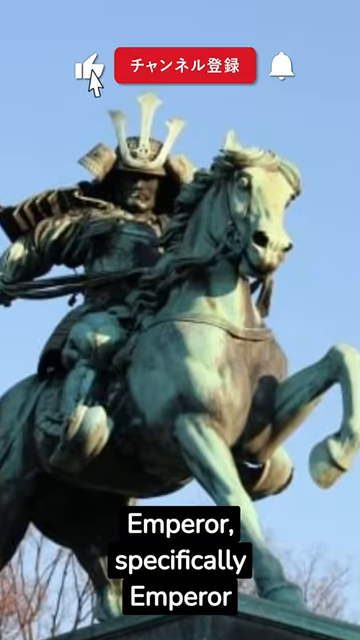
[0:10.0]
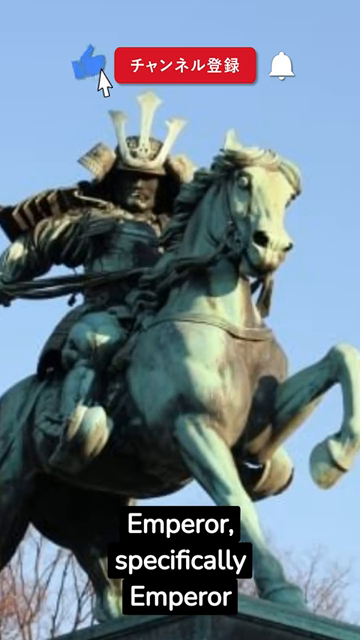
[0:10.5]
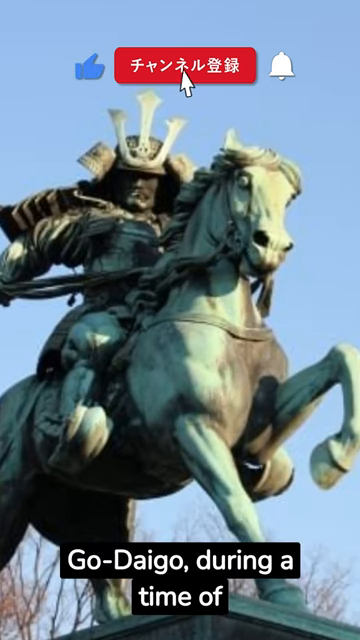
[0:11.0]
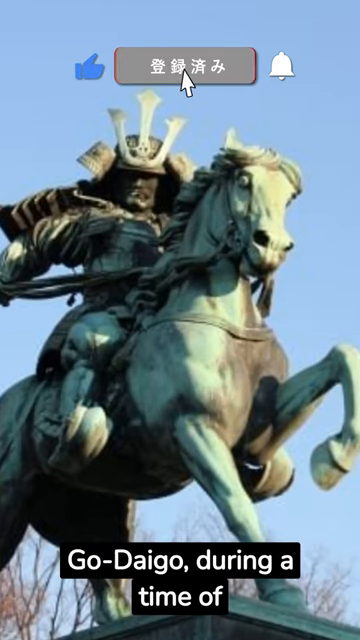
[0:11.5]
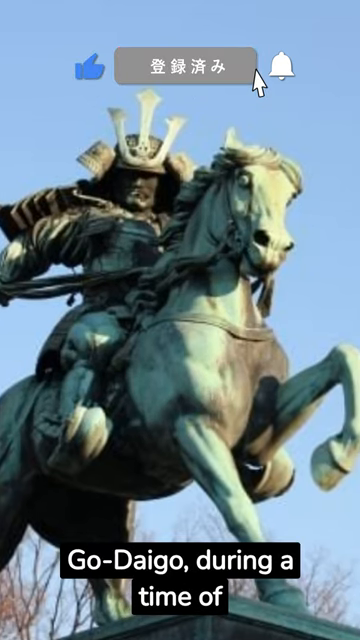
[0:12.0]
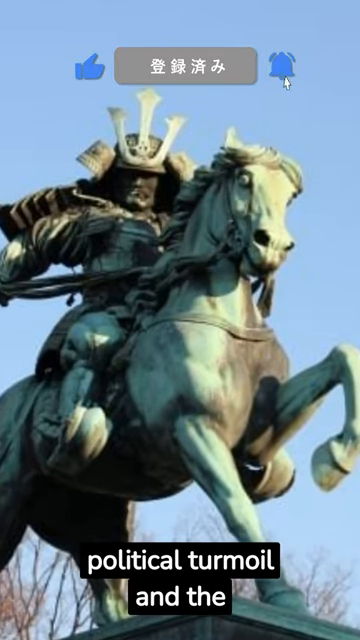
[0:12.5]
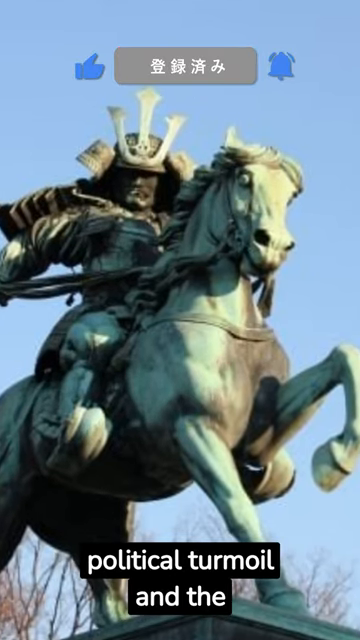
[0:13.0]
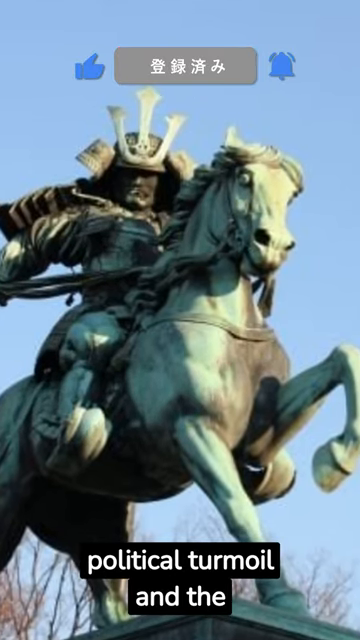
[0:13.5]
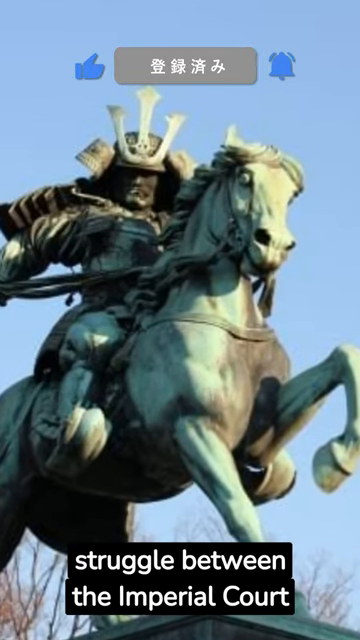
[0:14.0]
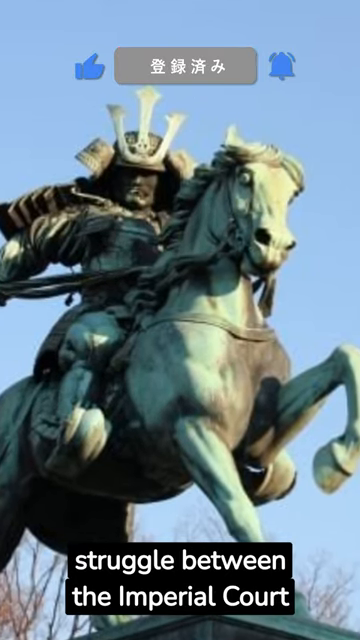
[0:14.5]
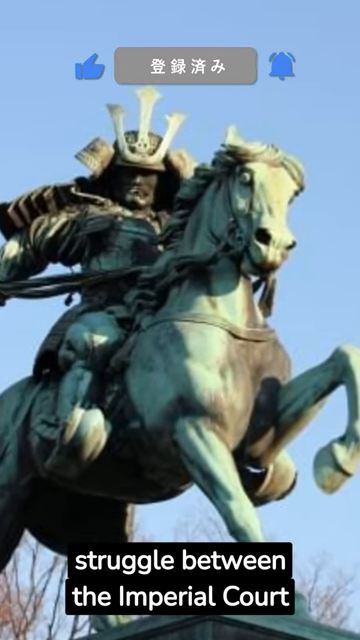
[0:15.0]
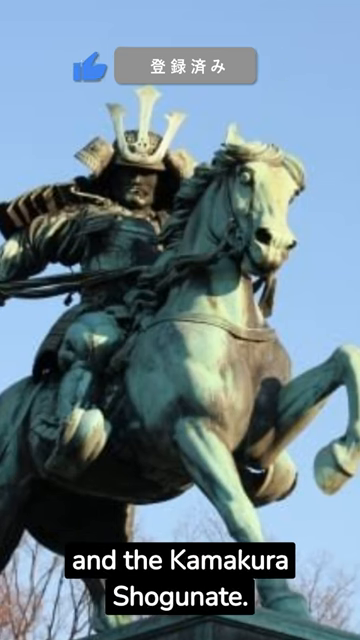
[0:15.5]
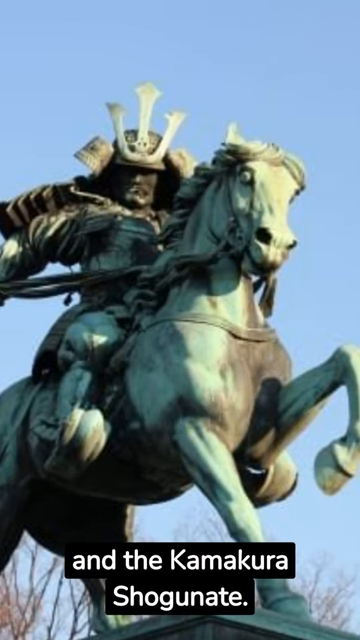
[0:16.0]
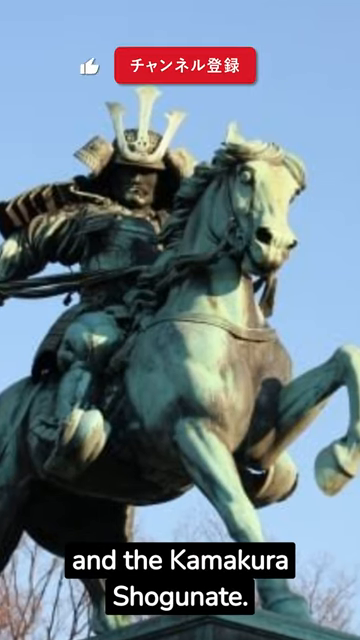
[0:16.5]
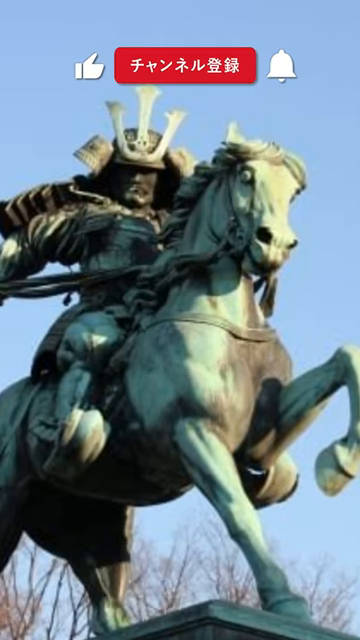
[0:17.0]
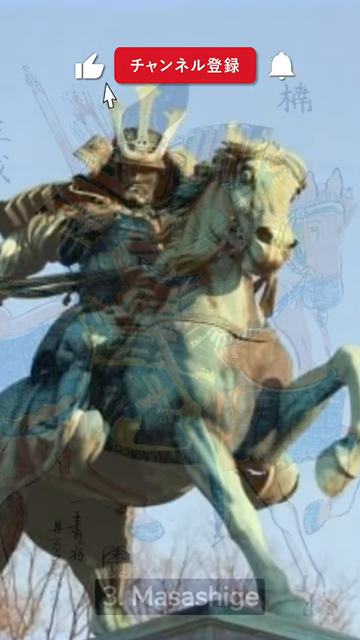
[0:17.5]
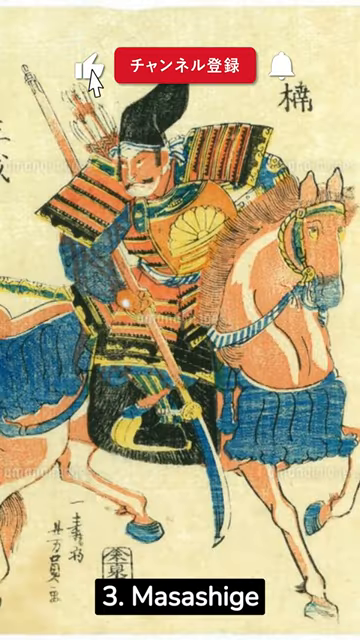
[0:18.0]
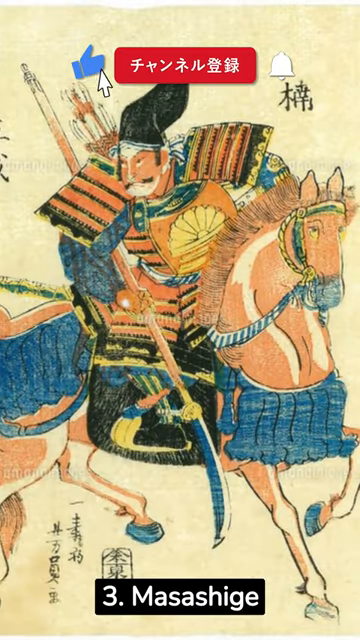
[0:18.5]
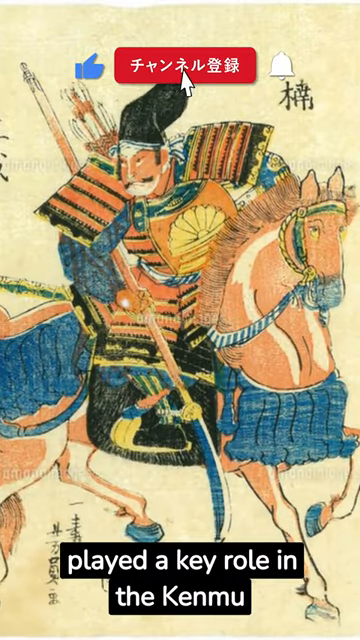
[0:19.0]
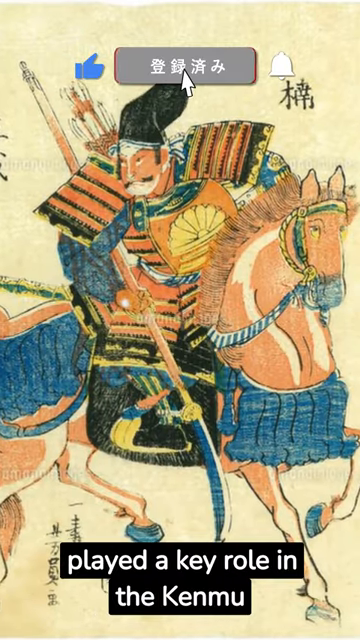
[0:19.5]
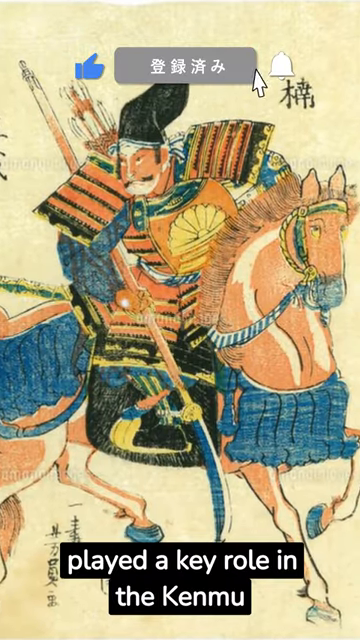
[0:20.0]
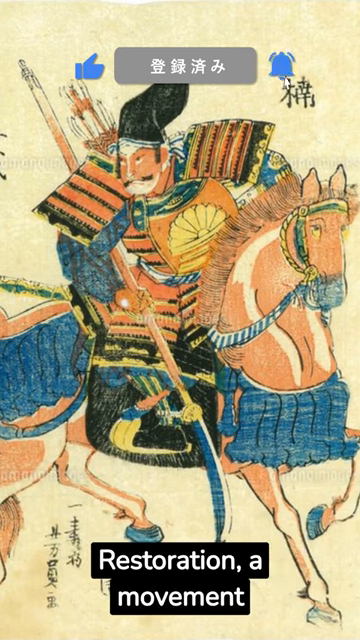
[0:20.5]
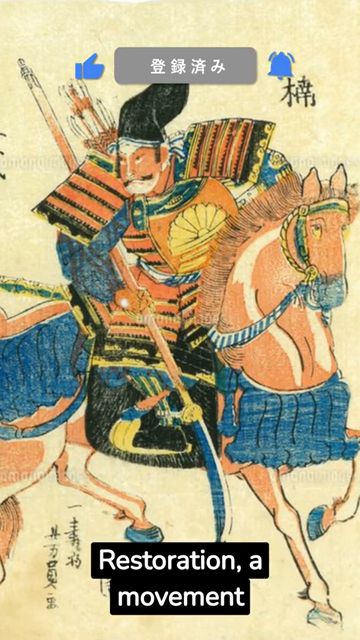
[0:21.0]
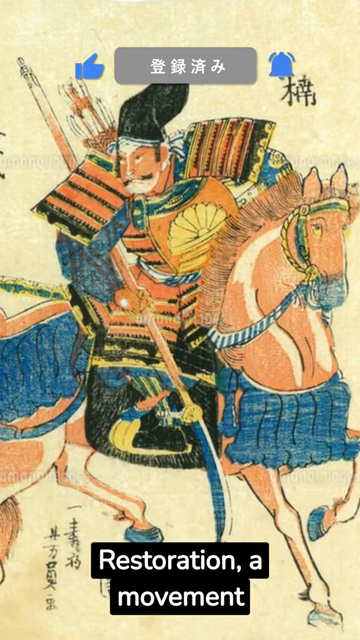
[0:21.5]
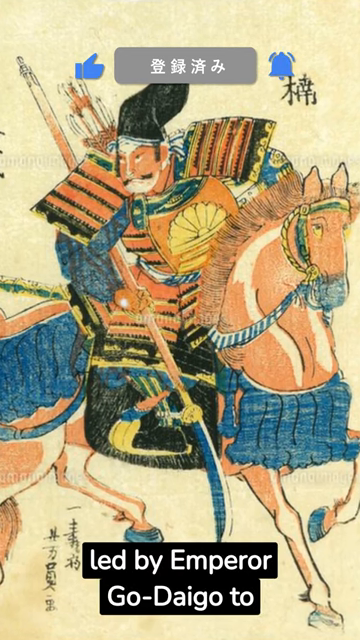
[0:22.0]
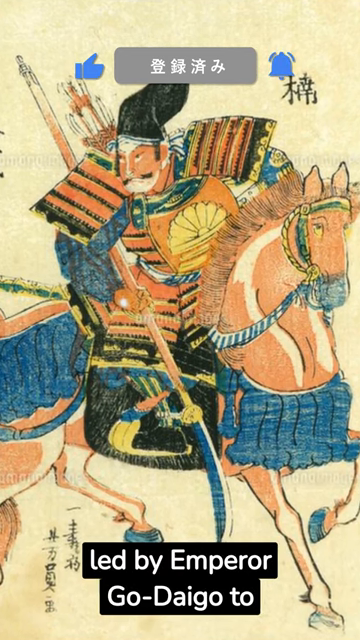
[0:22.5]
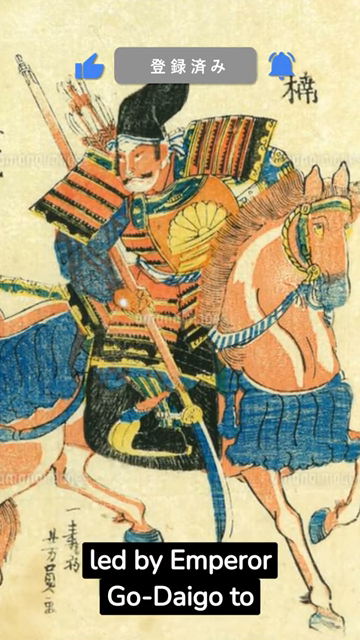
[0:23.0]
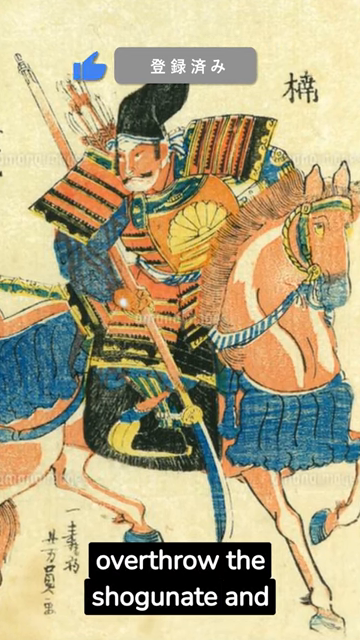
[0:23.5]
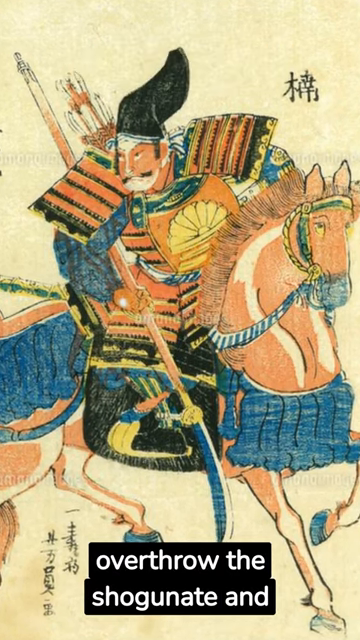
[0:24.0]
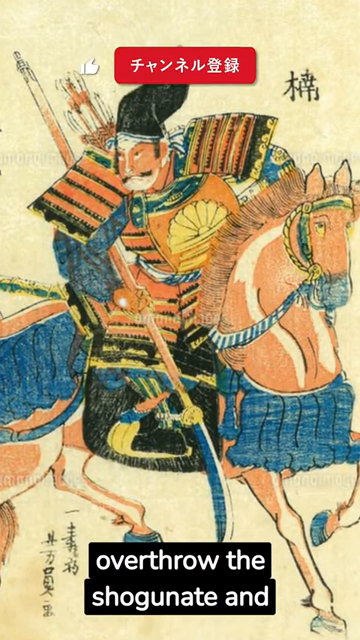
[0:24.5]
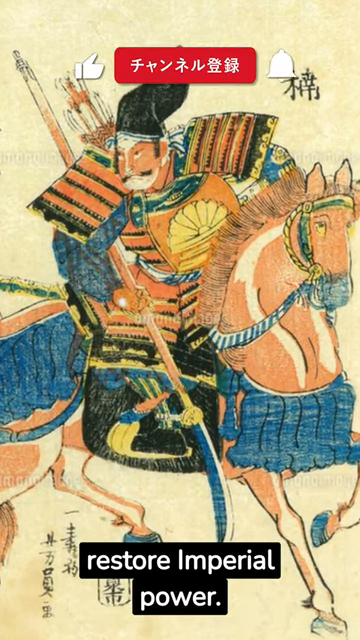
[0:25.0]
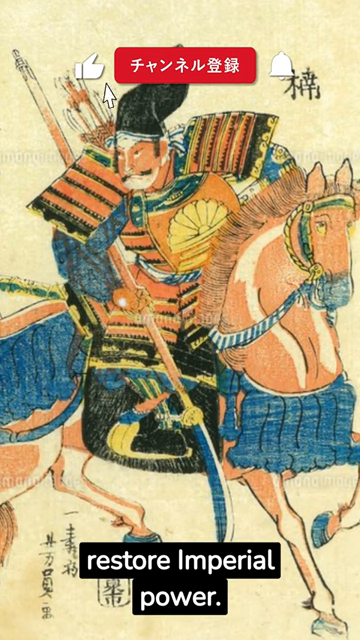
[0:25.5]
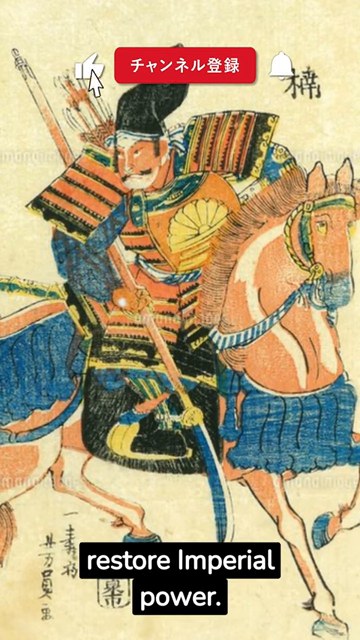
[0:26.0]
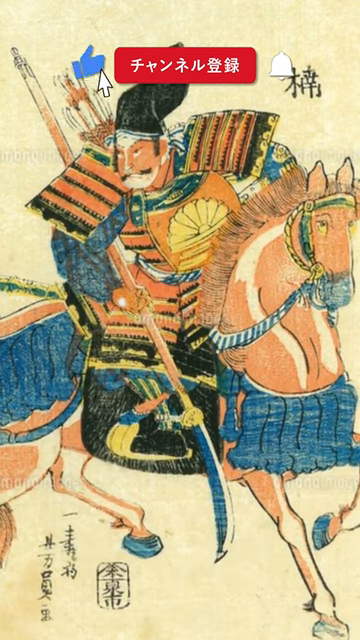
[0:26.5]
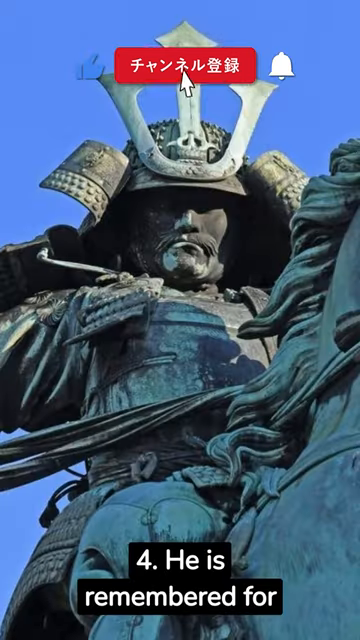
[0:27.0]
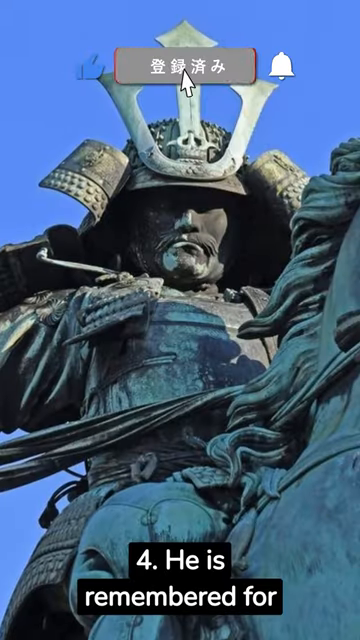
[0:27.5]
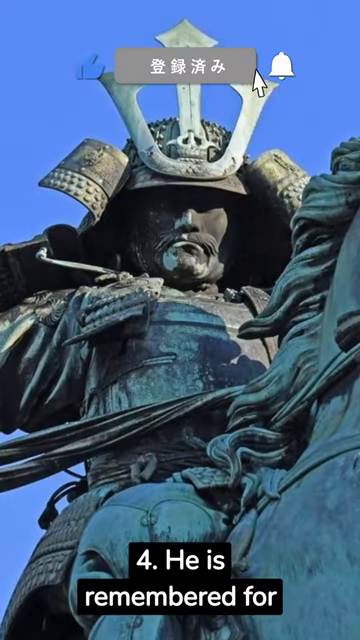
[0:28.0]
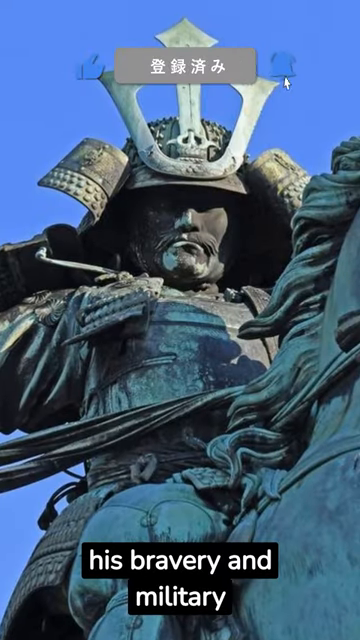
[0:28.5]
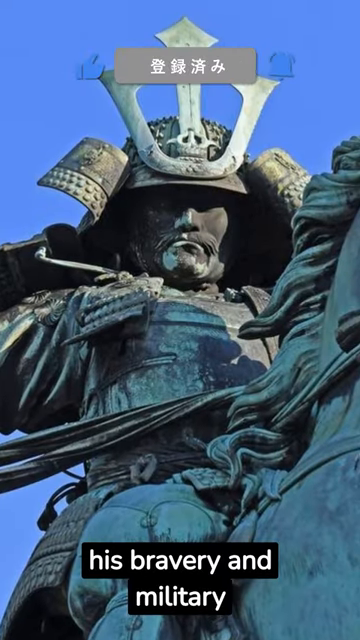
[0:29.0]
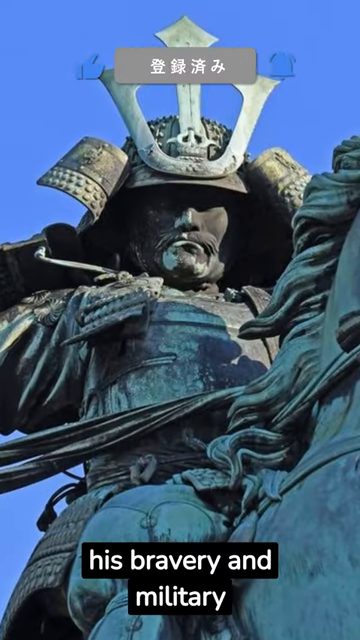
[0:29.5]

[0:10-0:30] The same statue image stays on screen. The text below changes to "Emperor, specifically Emperor Gaidaigo during a time of political turmoil and the struggle between the imperial court and the Kamakura shogunate," shown in two small lines that quickly move on. The camera zooms in very slowly on the samurai riding the horse, then the video transitions to a different image in a more traditional Japanese art style: a man in samurai armor riding a horse. He holds a naginata in his right hand, positioned with its blade to the ground. He wears very large shoulder plates, his armor is orange, and he has a blue shirt underneath it. The horse is somewhat orange-colored as well, with blue cloth hanging down from its chest. Another subscribe prompt appears at the top. At the bottom of the screen the text reads "Restoration, a movement led by Emperor Gaidaigo to overthrow the shogunate and restore imperial power. He is remembered for his bravery and military skill." The image then transitions to show a statue.